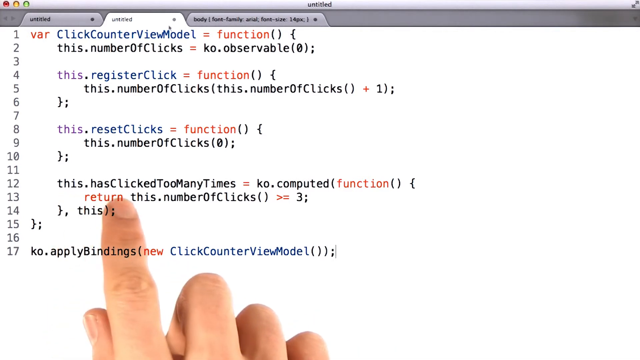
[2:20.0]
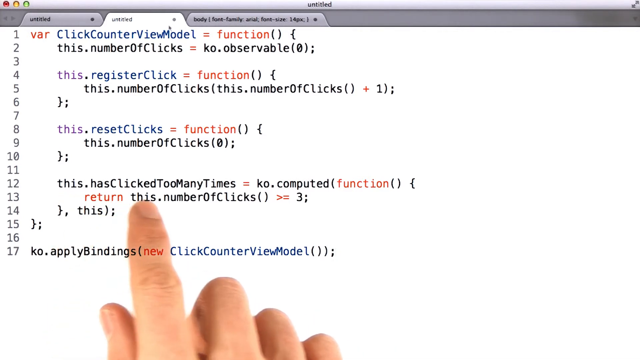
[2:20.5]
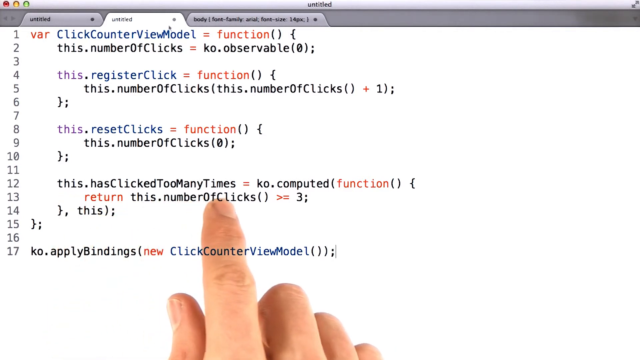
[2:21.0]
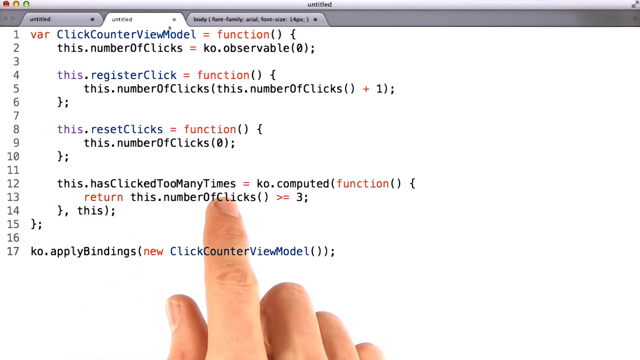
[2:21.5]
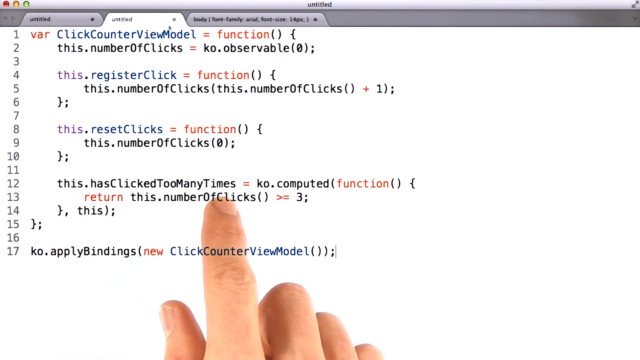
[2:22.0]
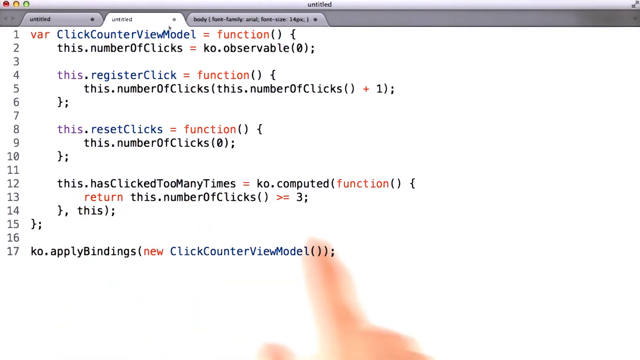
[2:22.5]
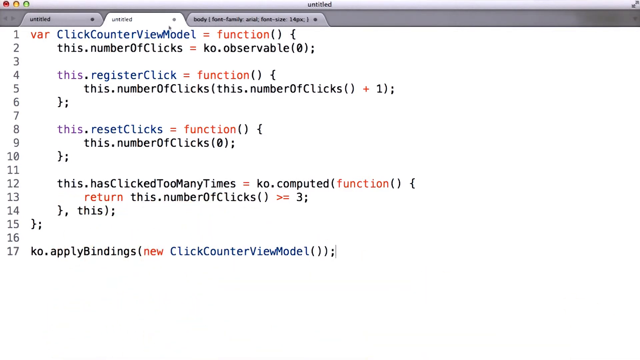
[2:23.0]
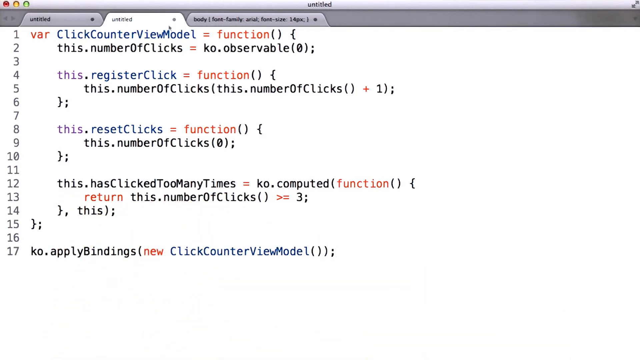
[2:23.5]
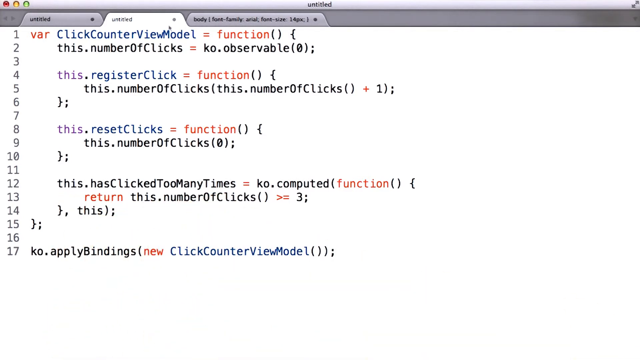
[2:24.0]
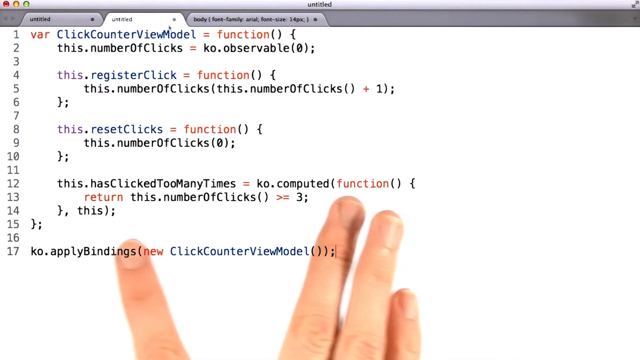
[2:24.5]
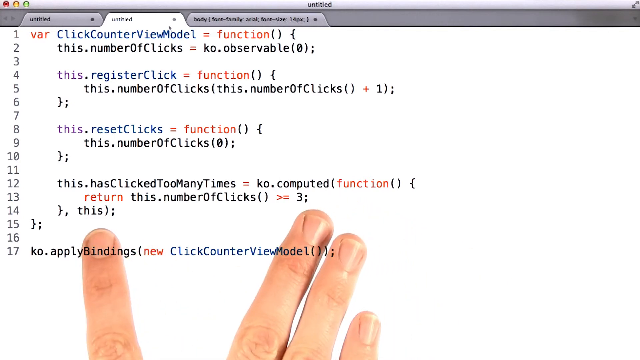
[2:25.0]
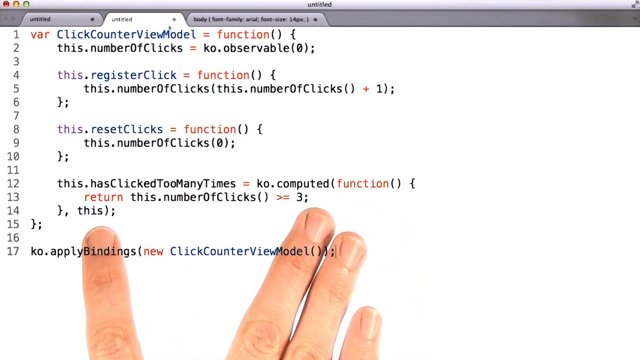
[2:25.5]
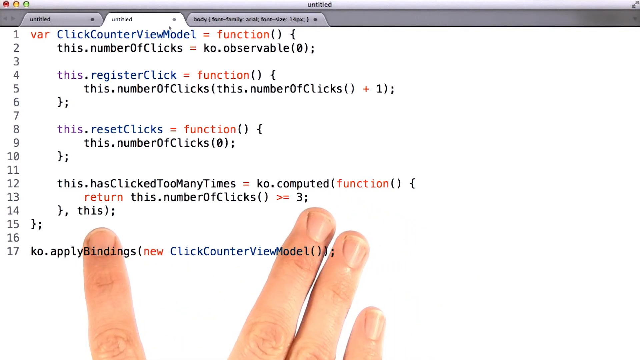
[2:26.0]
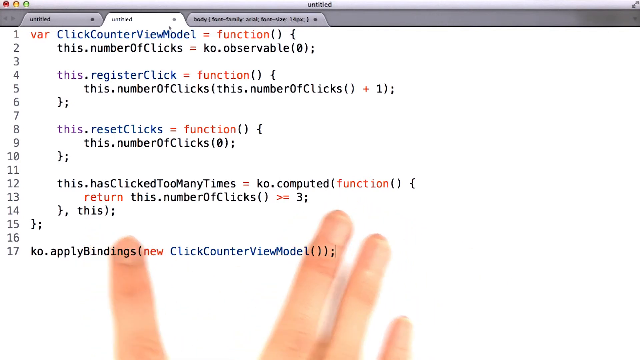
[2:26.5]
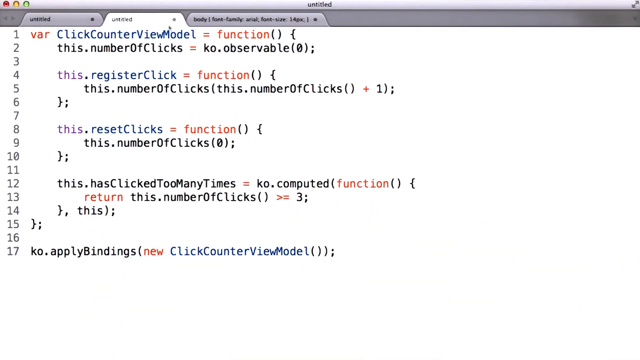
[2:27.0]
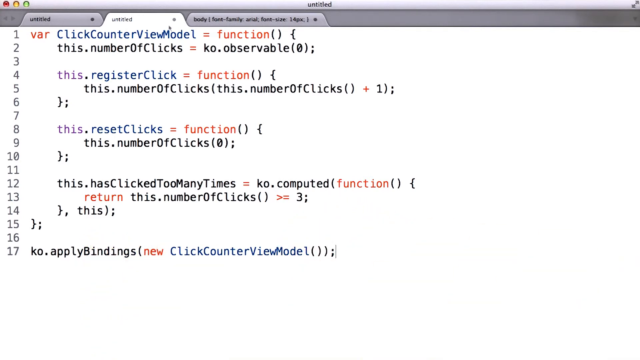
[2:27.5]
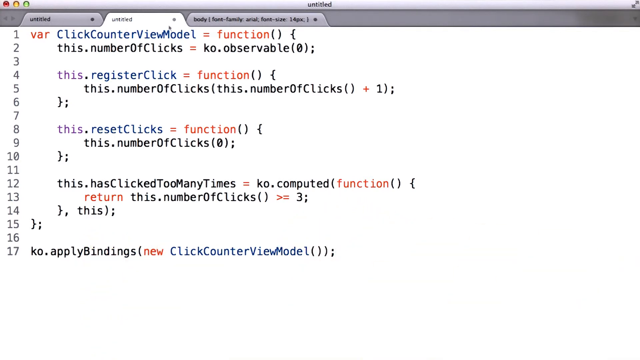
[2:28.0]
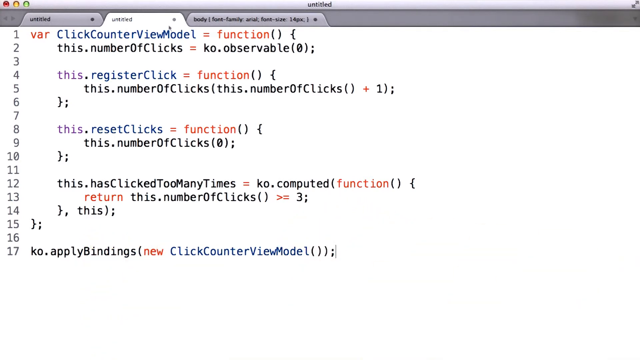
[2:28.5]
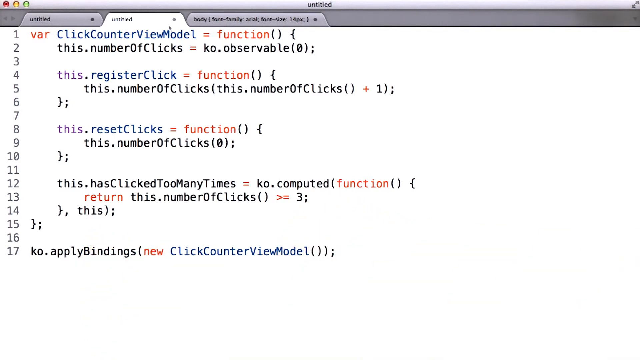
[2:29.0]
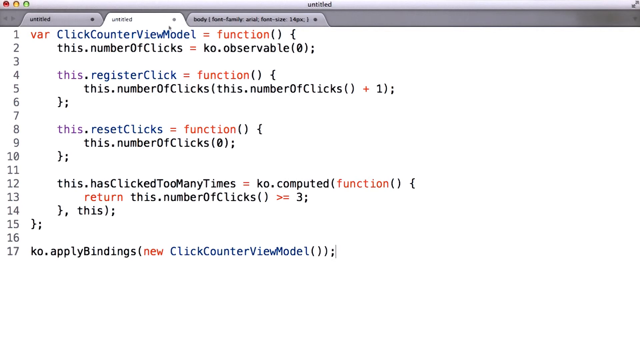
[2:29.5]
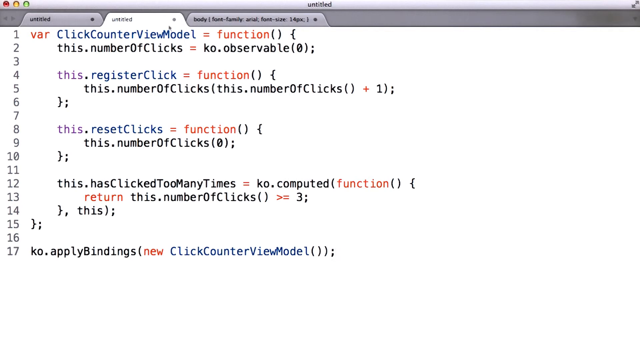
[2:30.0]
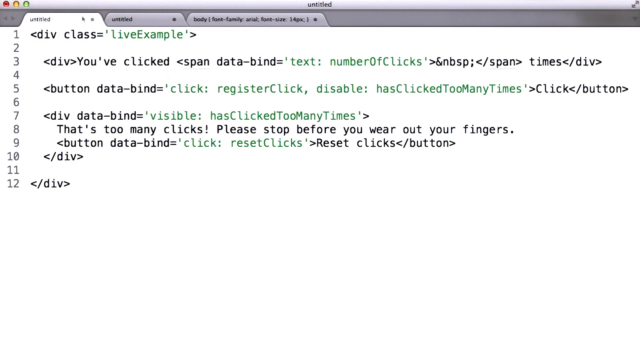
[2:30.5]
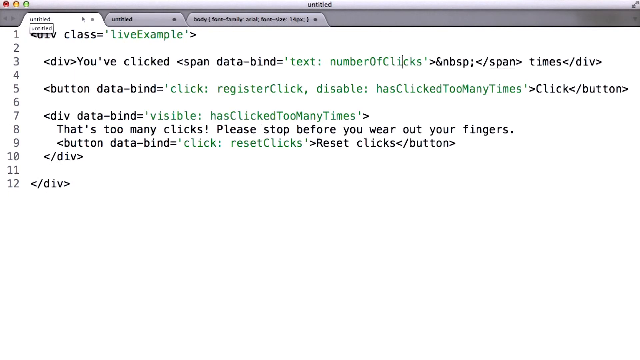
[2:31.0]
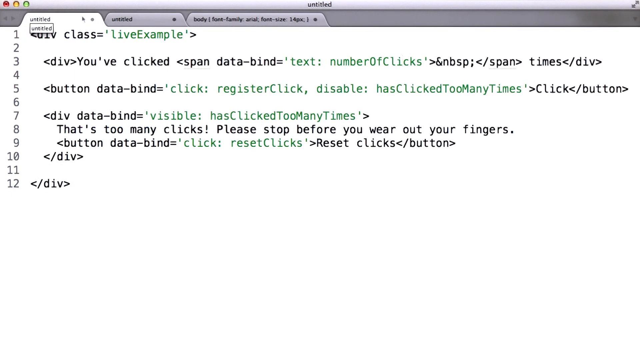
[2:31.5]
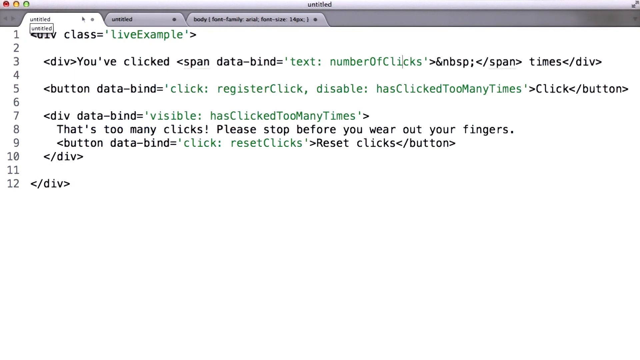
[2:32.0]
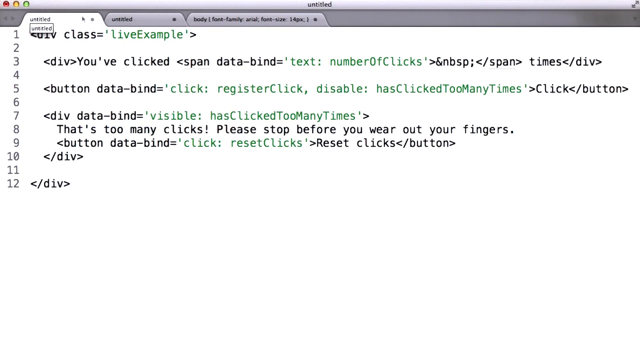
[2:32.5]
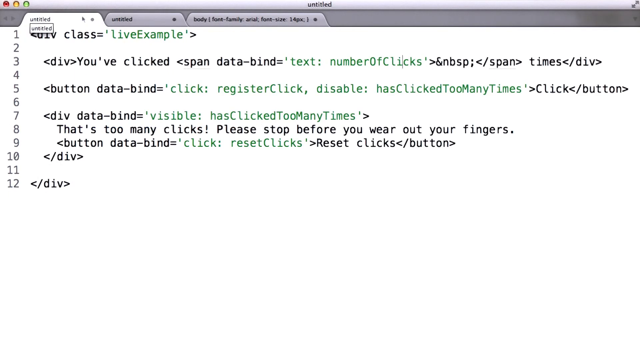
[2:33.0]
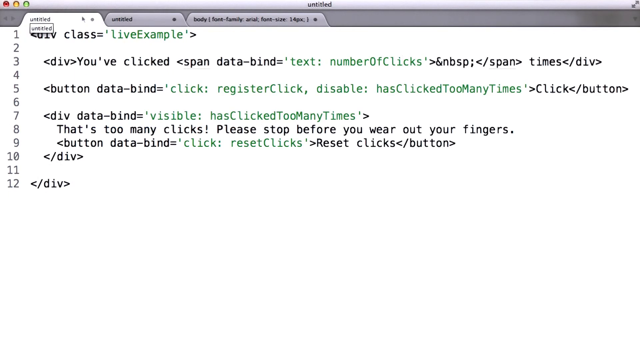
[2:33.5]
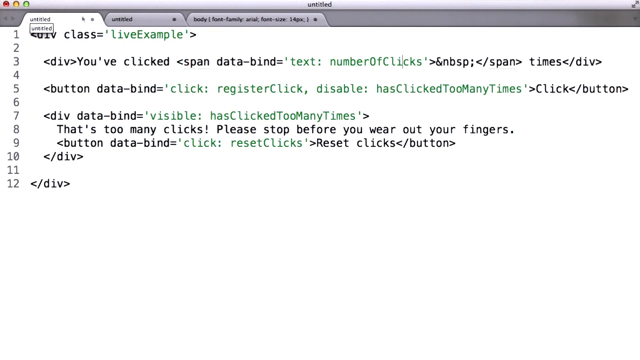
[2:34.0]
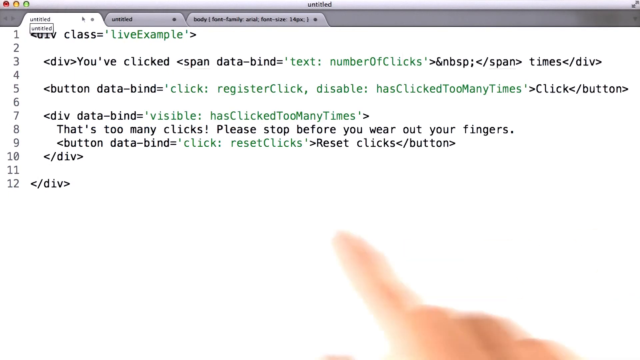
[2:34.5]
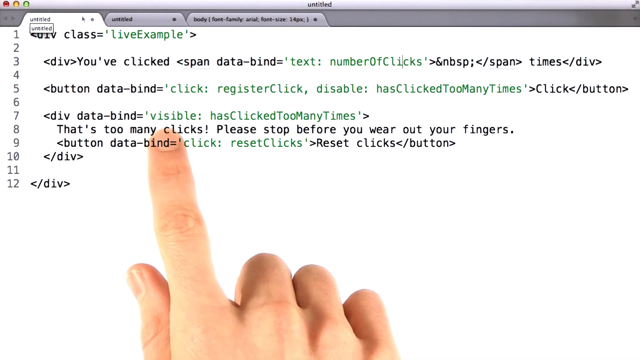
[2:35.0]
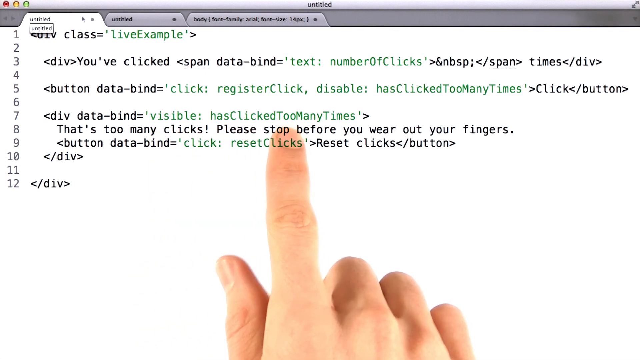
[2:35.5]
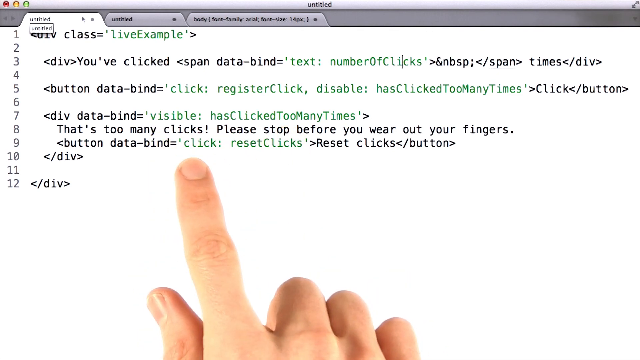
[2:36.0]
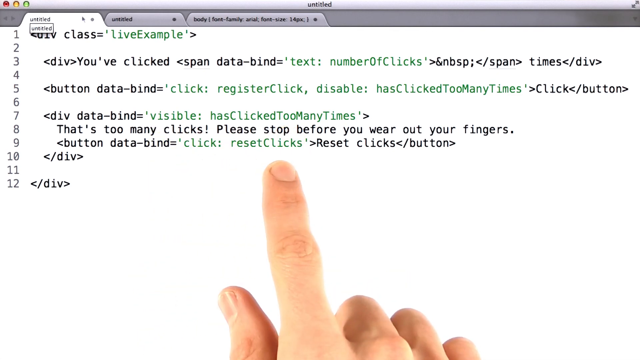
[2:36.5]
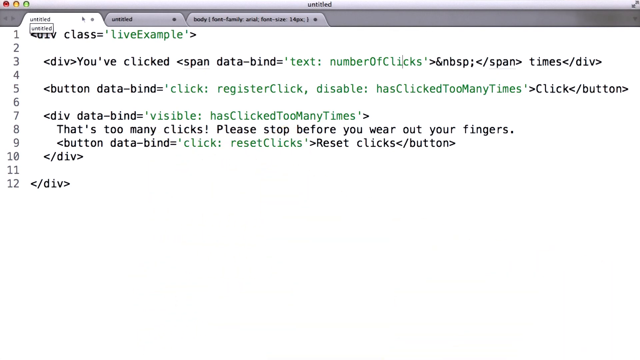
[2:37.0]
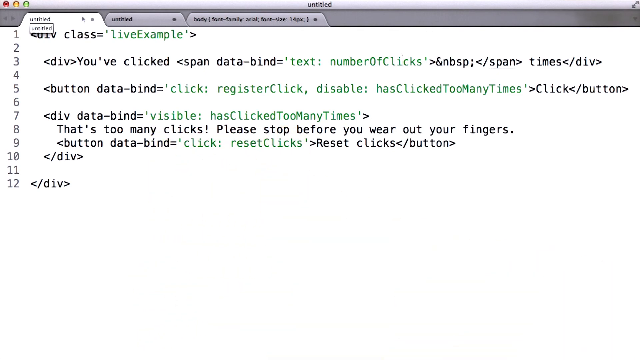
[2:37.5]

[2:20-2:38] The view returns to the page behind the coding page about the clicks, and the hand is back, with four fingers visible and one finger sort of separated from the other three. Text includes "You've clicked span data-bind", "number of clicks", "button data-bind = click: register click, disable: has clicked too many times", "clicks, please stop before you wear out your fingers", "button data-bind = click: reset clicks", "Reset clicks" button and "document". The hand then has the middle finger on top of the index finger, the third finger bent a bit and the fourth finger bent even further, using the finger as a pointer to show specific things on the page.